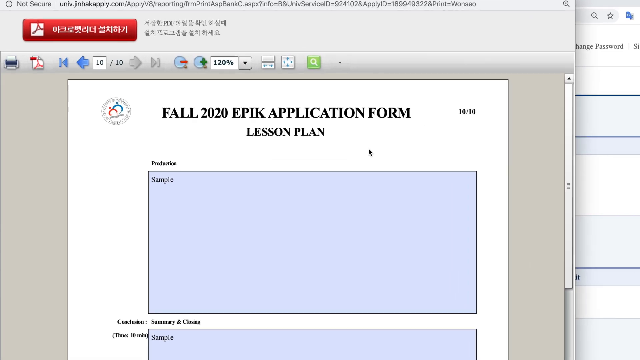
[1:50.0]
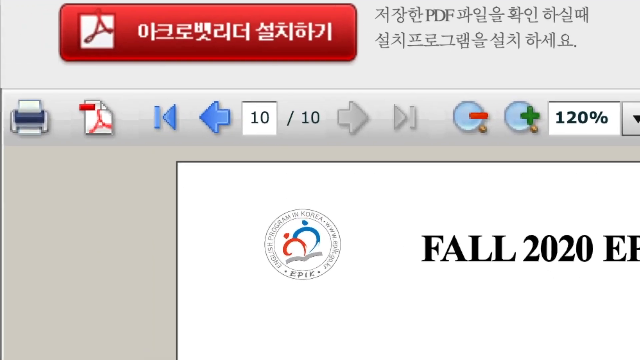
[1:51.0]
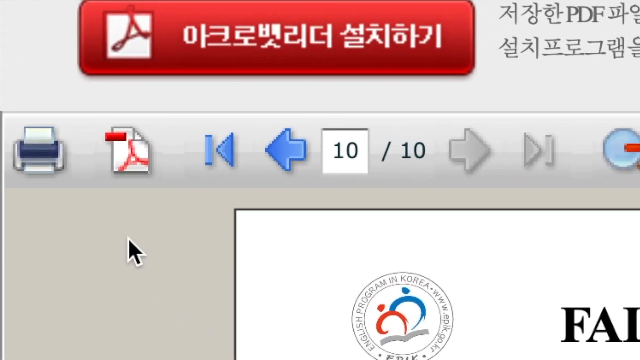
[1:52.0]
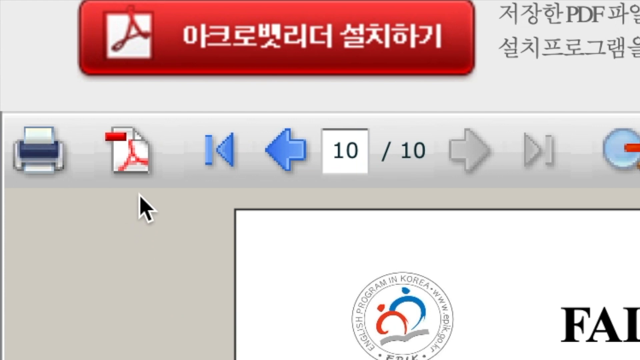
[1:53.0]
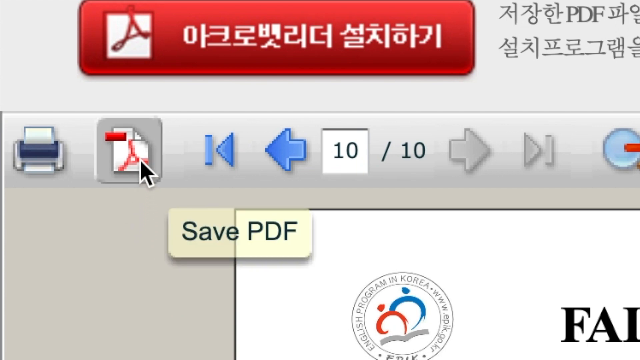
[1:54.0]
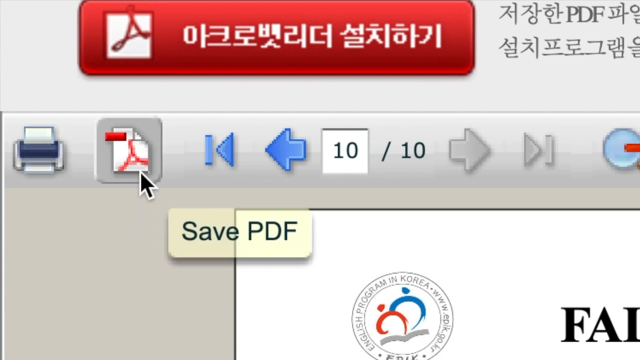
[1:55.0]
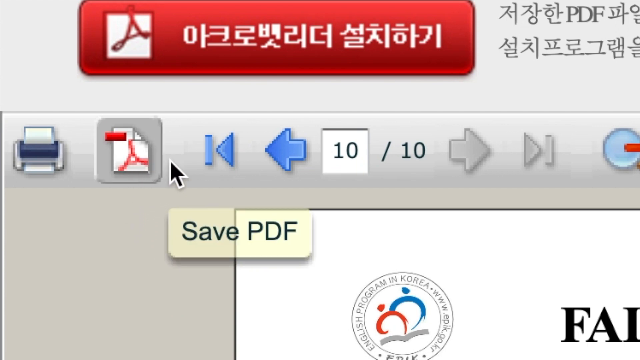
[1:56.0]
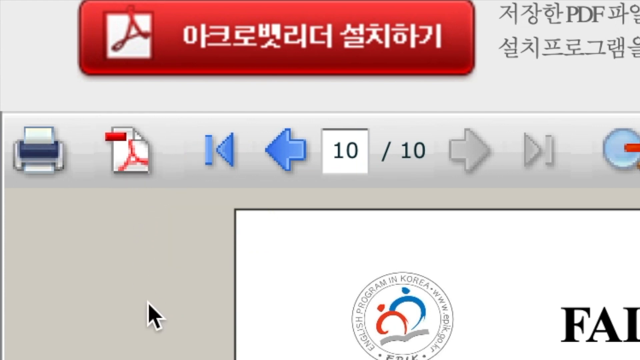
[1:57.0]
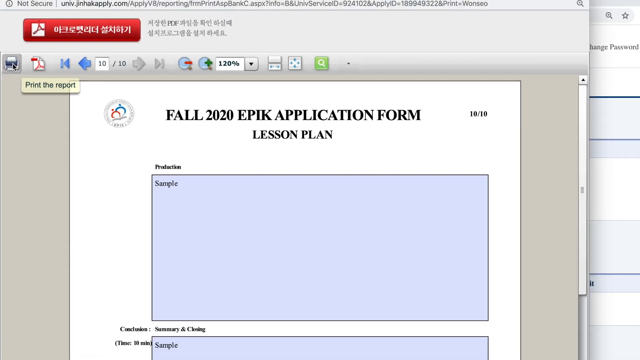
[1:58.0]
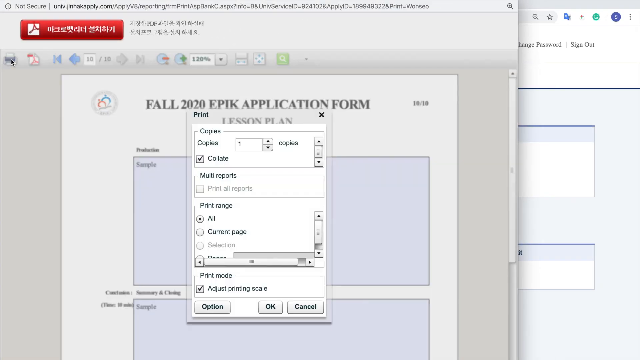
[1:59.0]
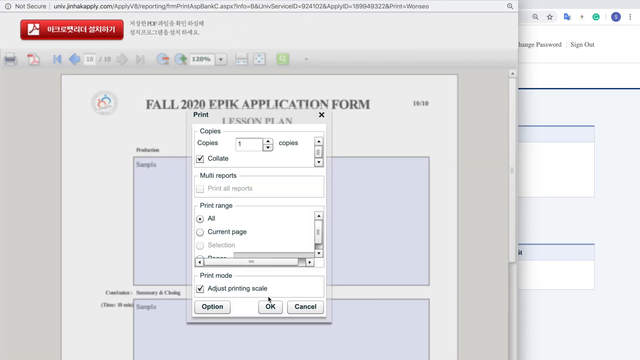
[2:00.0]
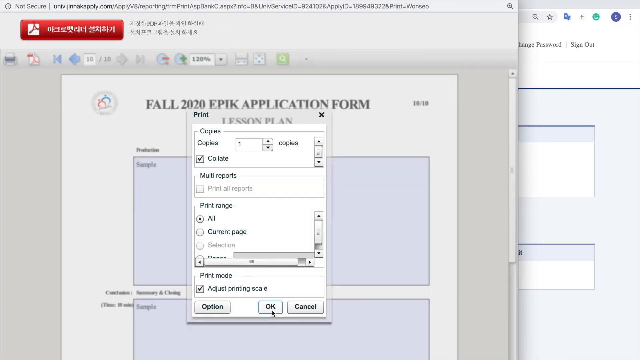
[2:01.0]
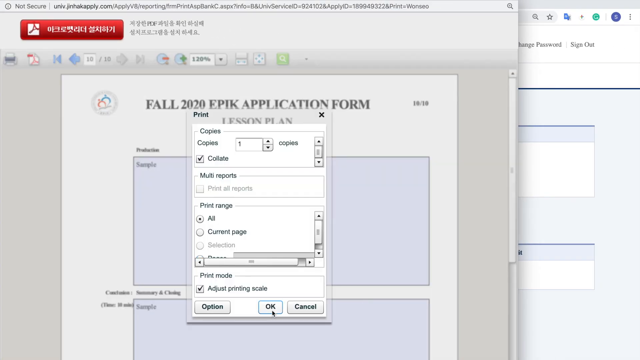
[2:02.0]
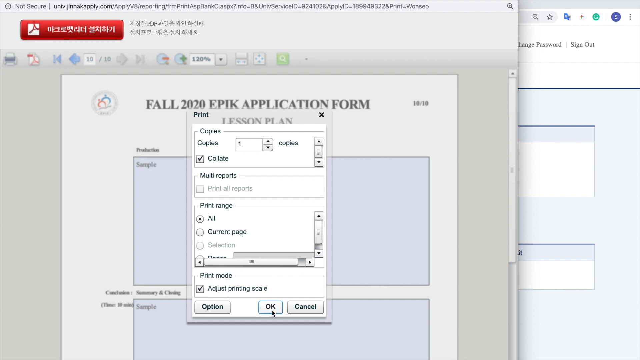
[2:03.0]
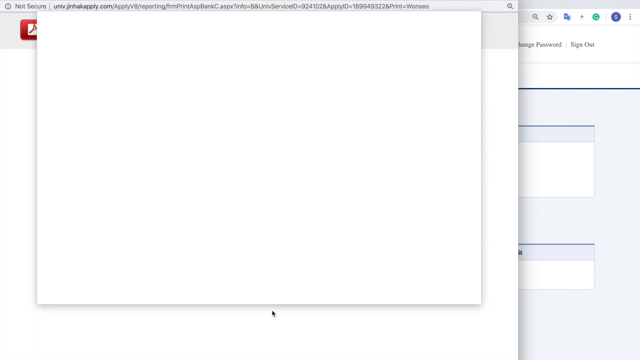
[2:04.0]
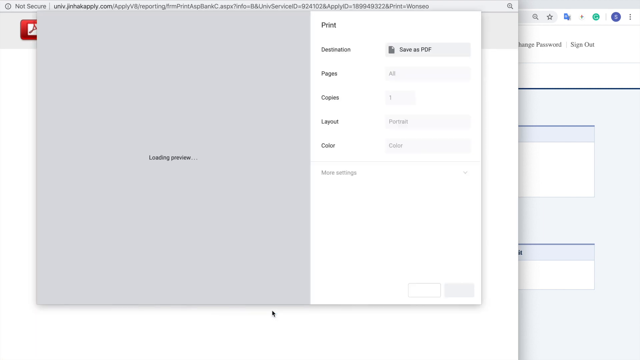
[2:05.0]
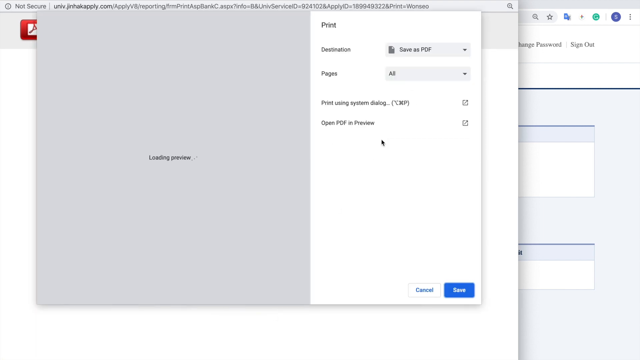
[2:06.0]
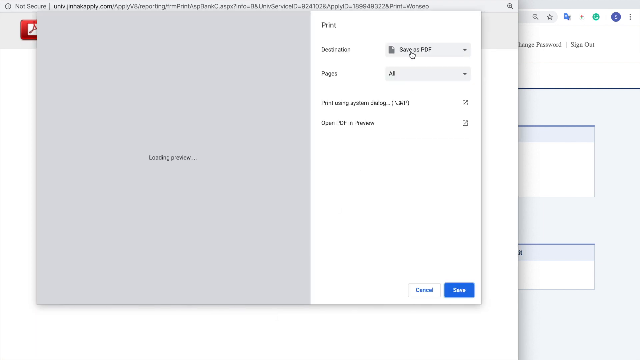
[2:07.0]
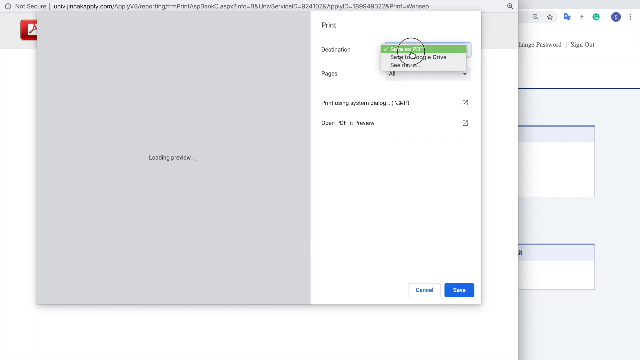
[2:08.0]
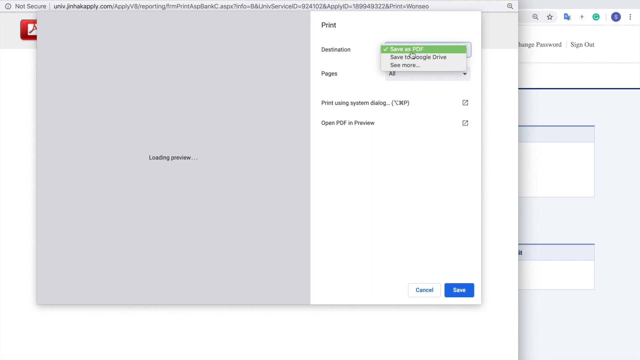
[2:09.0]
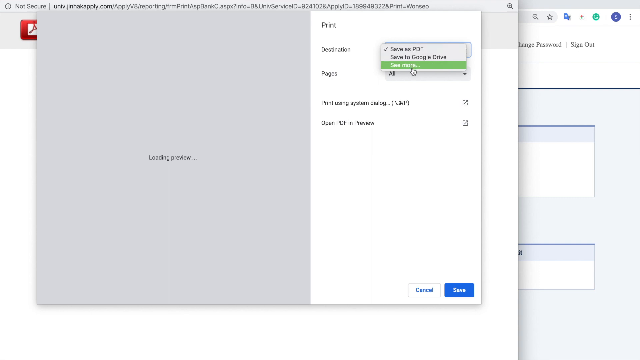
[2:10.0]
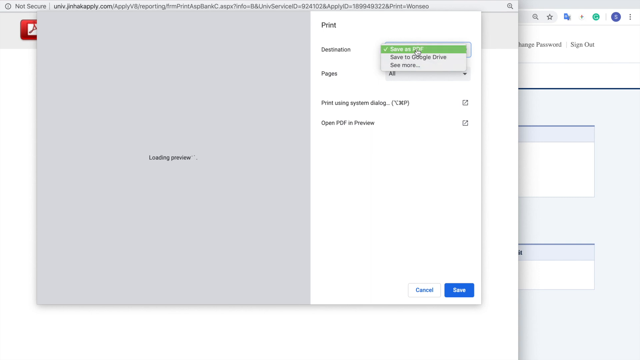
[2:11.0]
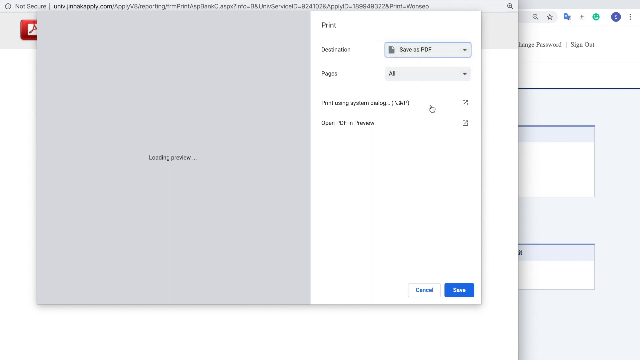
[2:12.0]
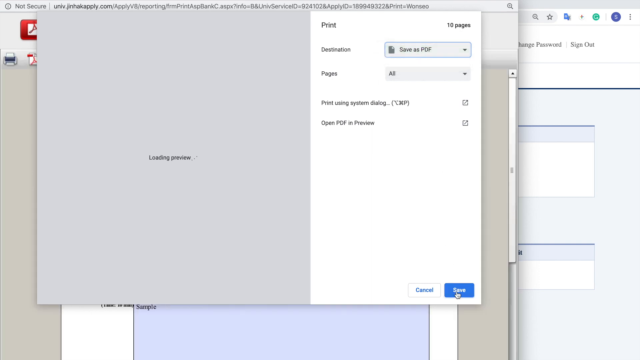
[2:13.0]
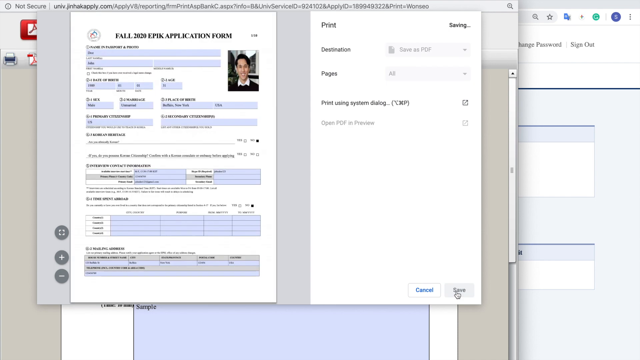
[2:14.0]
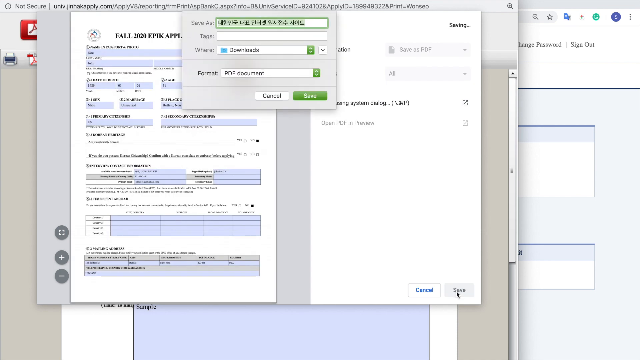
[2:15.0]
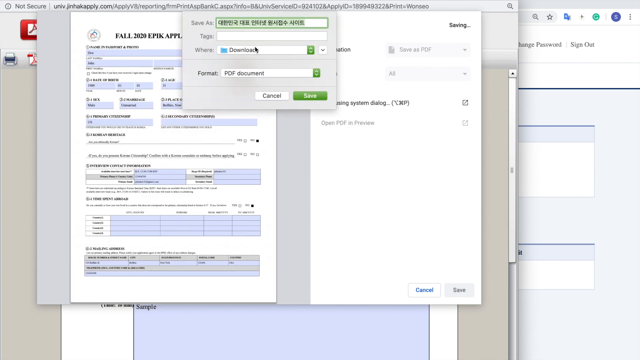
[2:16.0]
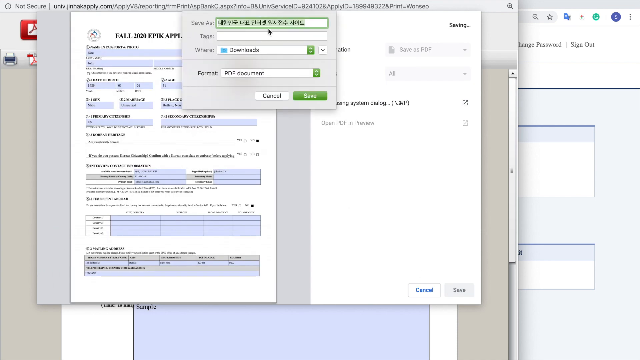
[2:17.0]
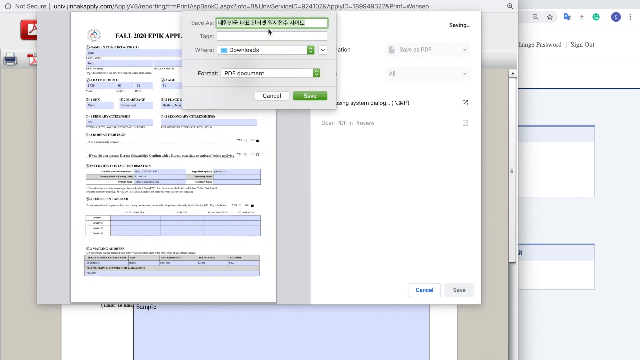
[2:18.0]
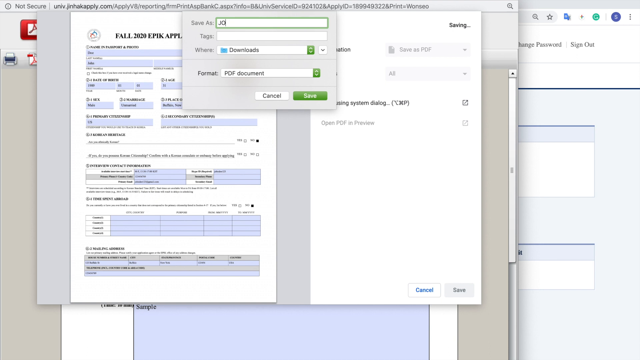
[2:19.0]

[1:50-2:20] The EPIK Fall 2020 application form lesson plan shows a large blank space for production and summary. An Adobe option to save as PDF is at the top left, close to the printer icon. A print window offers collate and printing scale options; the person clicks collate with one copy and is about to hit the OK button to print. Next, a dialog shows save as PDF, print all pages, and open PDF in preview; the person keeps save as PDF and is about to click the blue save button at the right.